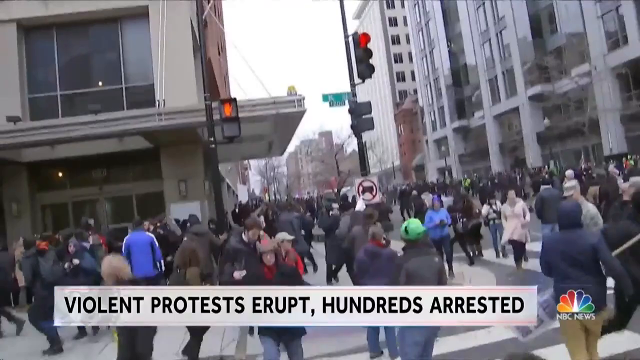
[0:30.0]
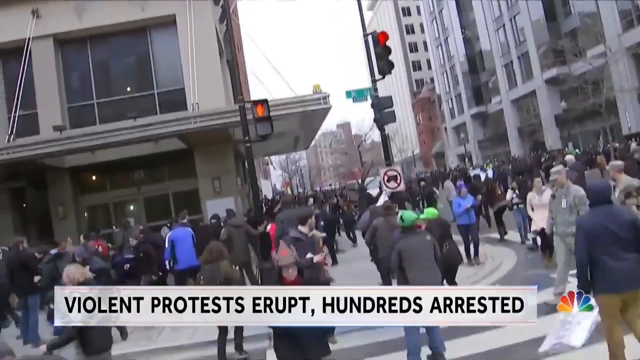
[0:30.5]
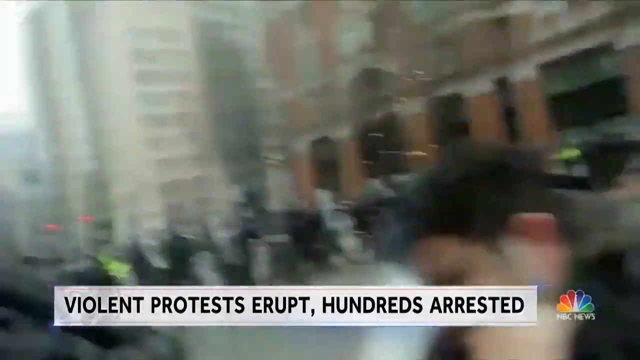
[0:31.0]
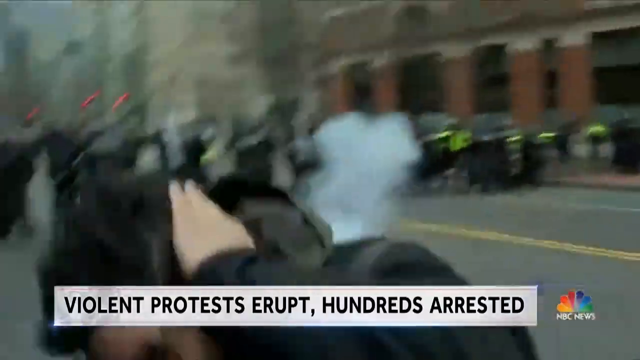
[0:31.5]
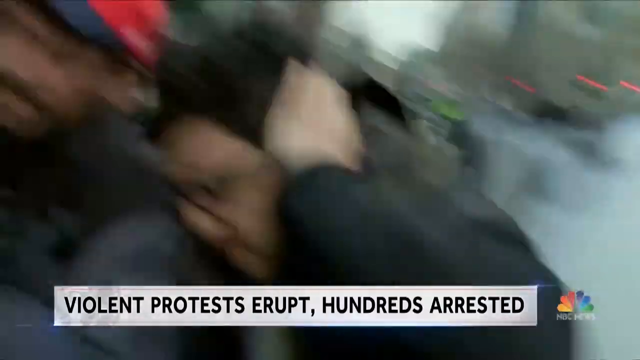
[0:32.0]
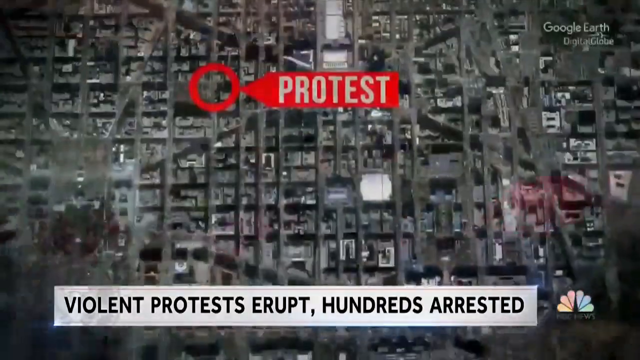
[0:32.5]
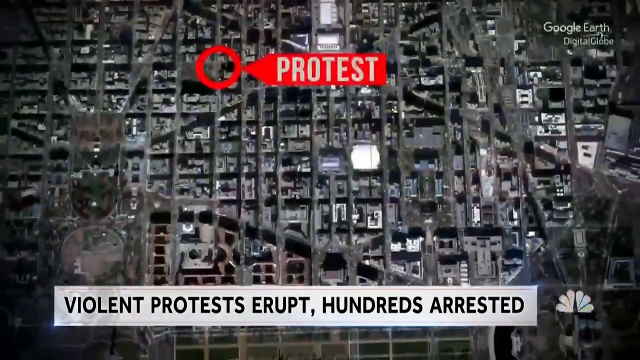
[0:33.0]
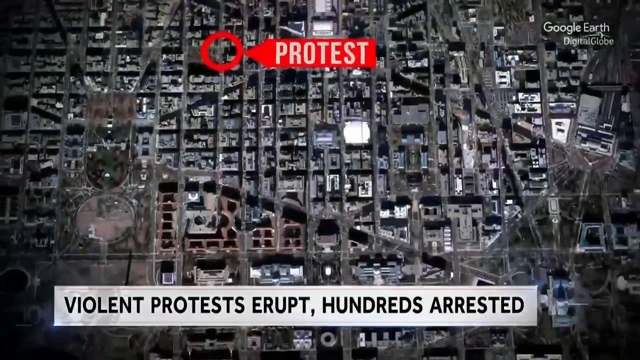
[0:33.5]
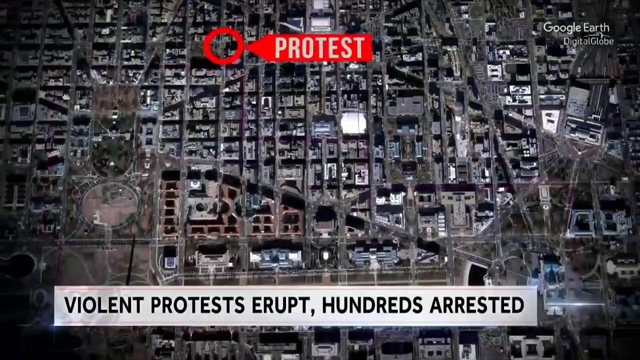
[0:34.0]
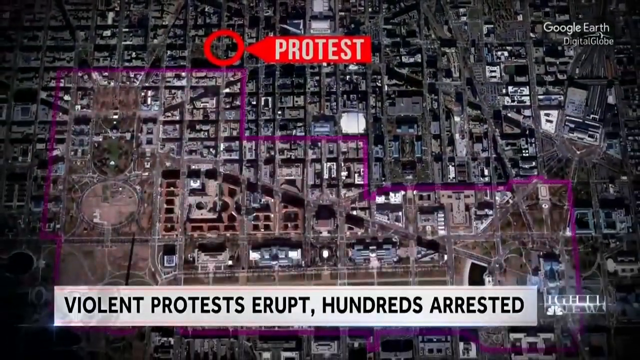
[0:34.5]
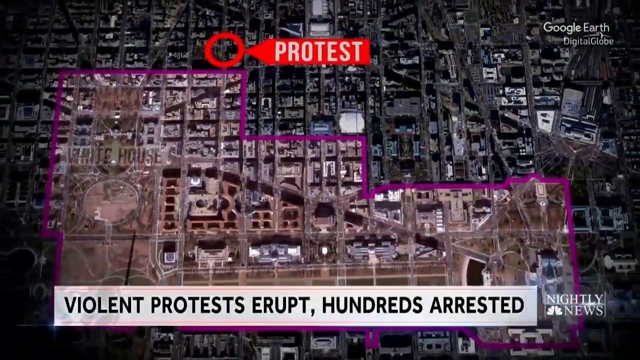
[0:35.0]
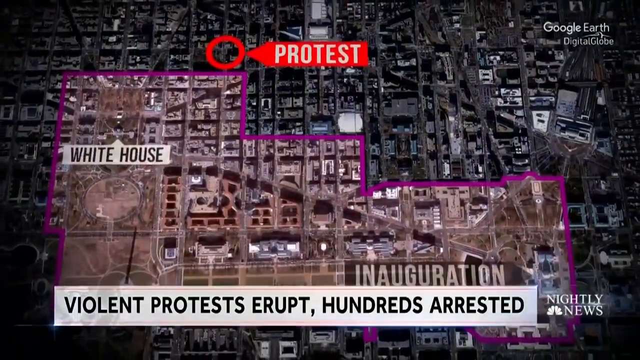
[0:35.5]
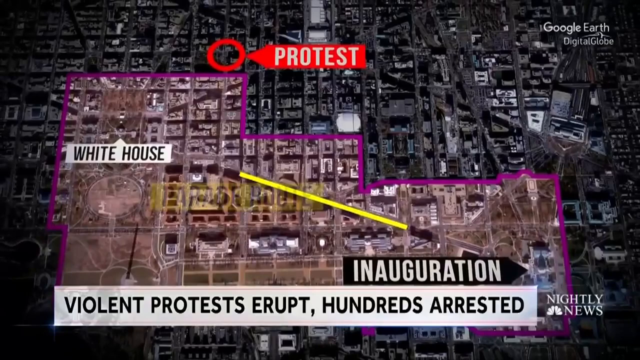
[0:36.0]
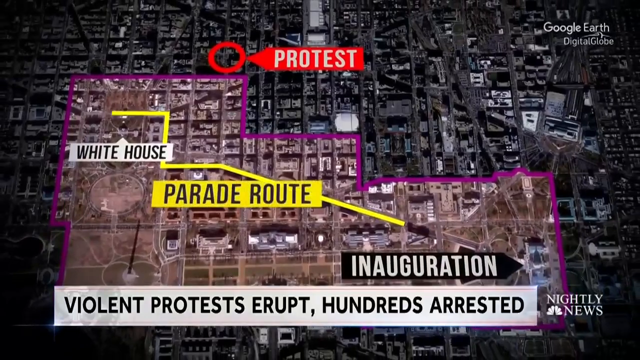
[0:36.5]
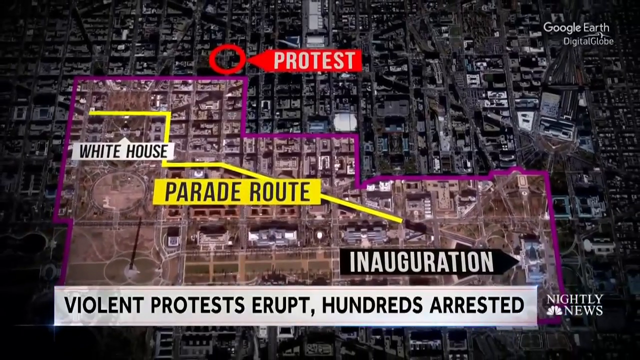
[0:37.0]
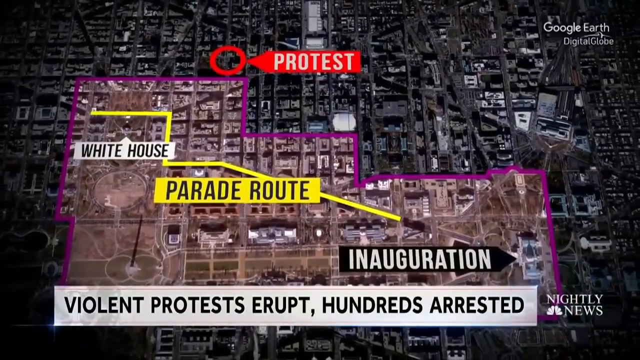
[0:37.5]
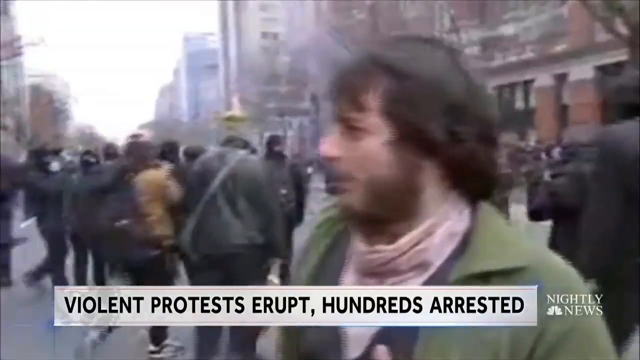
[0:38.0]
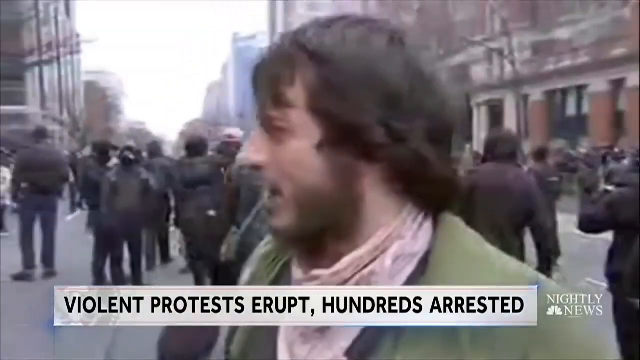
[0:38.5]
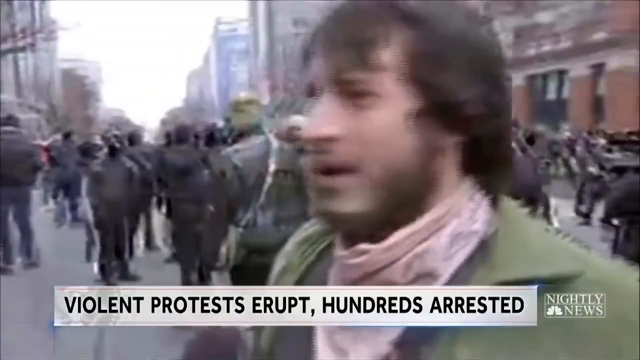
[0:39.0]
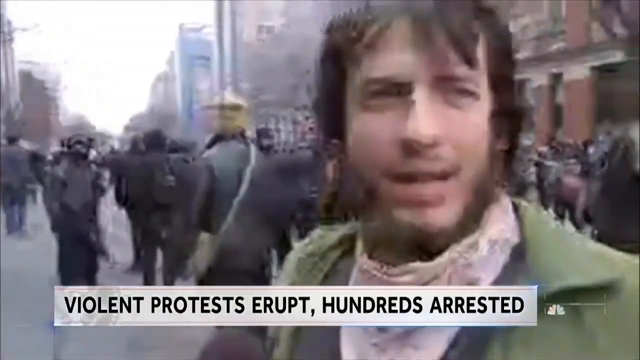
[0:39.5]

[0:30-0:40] A map-like overlay of the protest appears, with a red circular outline marking the protest, which seems to be directed against Trump, his administration and policies. The map shows the parade route, highlighted in yellow, running from the inauguration toward the White House, and the area around the inauguration and the White House is surrounded by a purple border with a light orange color inside the box. A close-up shows a man wearing a green jacket. Then a tear gas bomb explodes and people cover their ears and move away from it as fast as they can, as the police use it to disperse the crowd.